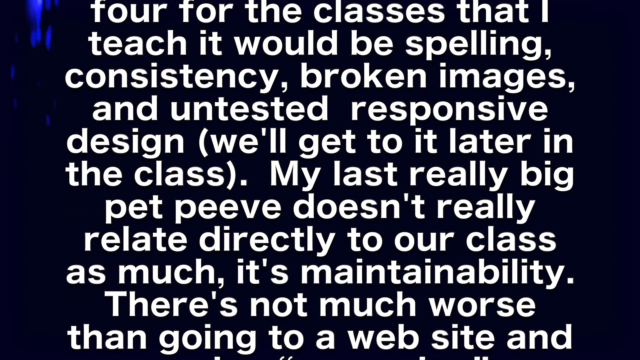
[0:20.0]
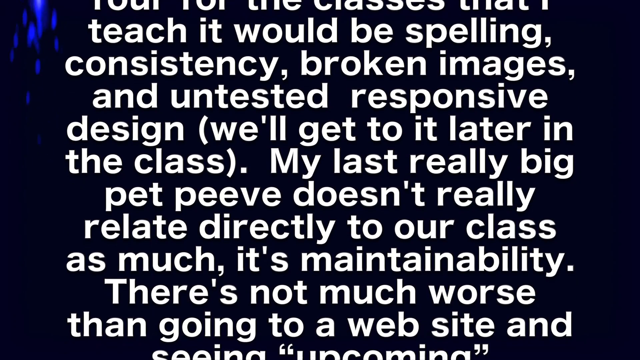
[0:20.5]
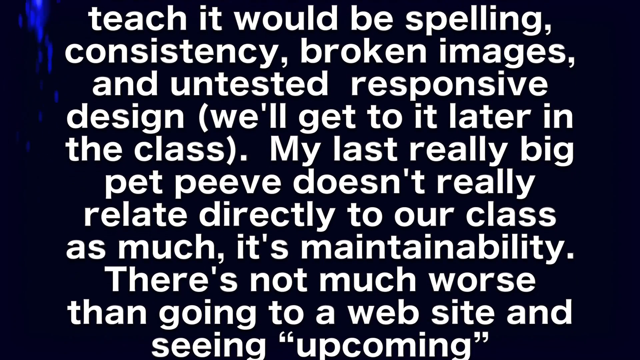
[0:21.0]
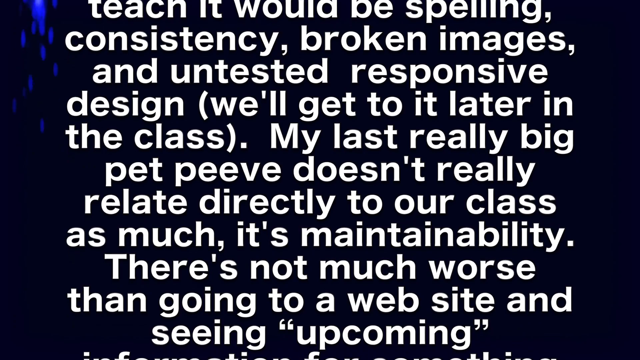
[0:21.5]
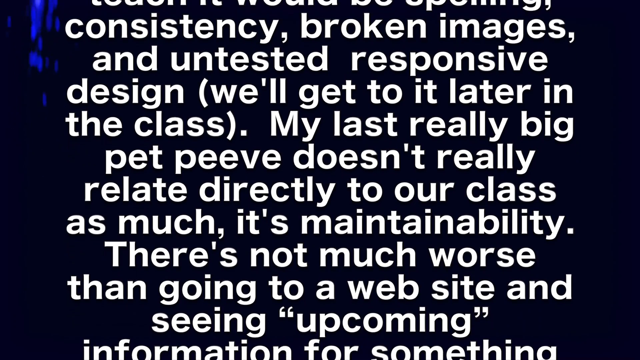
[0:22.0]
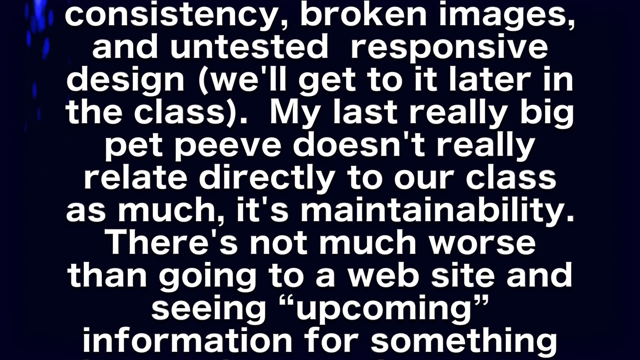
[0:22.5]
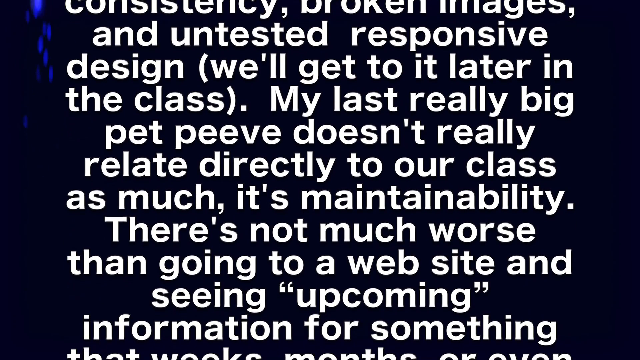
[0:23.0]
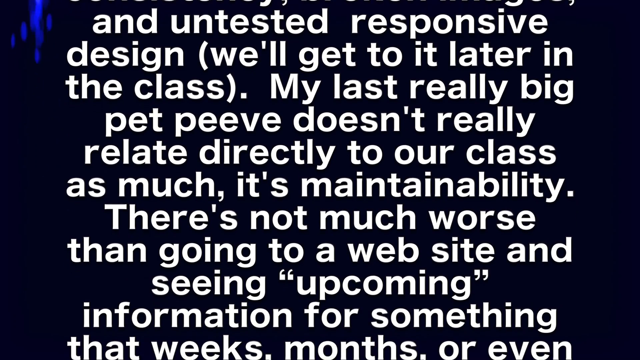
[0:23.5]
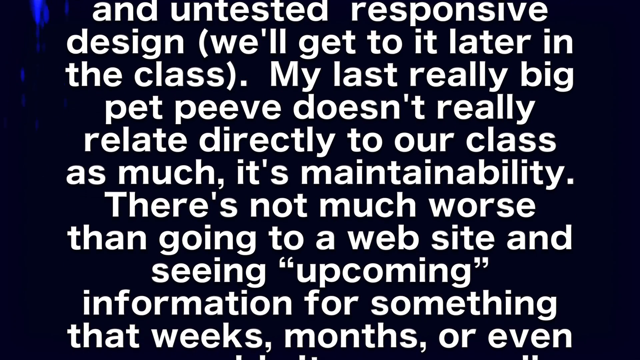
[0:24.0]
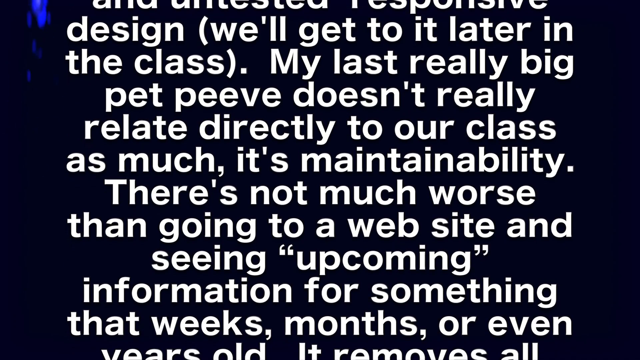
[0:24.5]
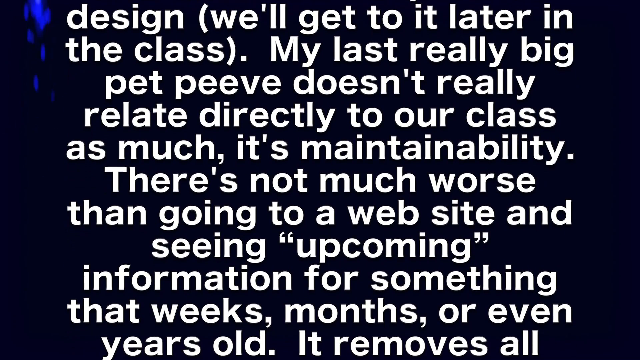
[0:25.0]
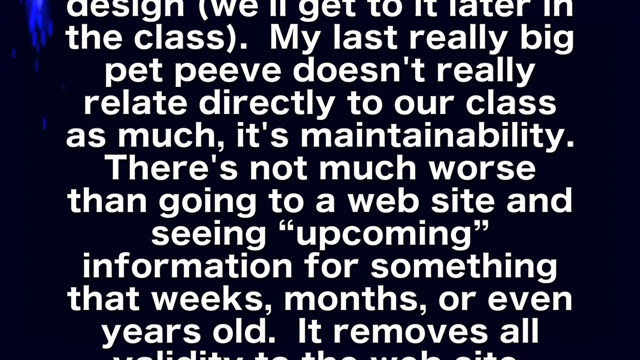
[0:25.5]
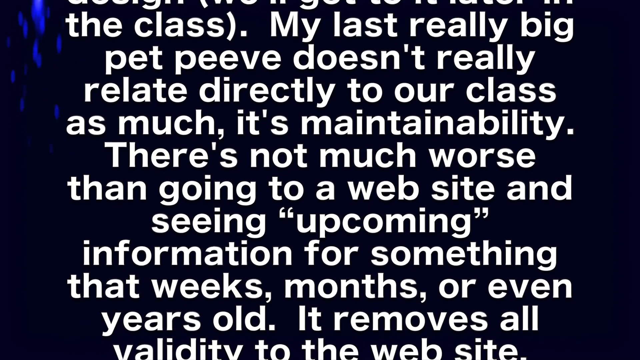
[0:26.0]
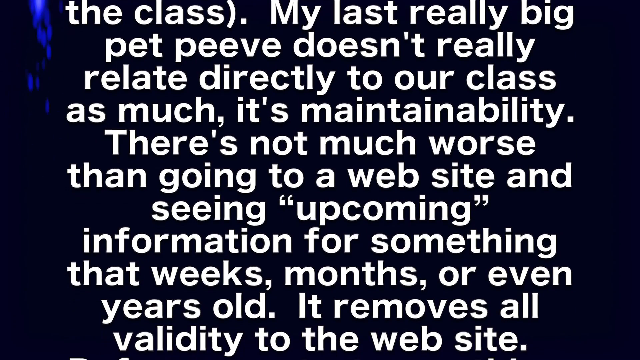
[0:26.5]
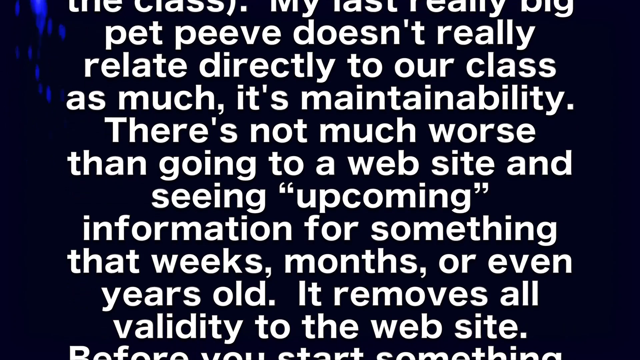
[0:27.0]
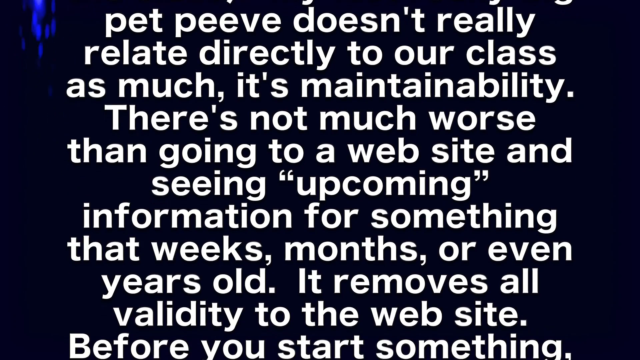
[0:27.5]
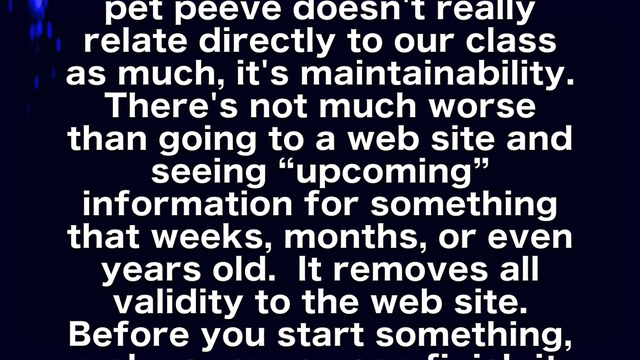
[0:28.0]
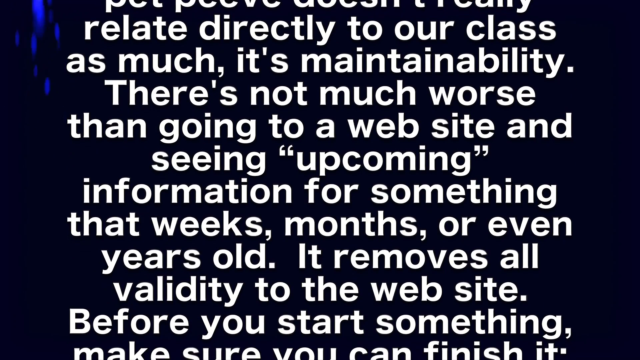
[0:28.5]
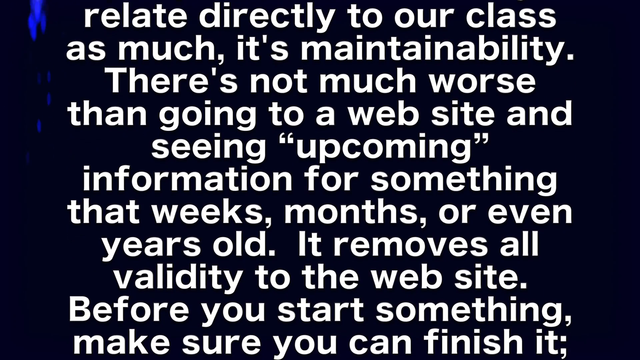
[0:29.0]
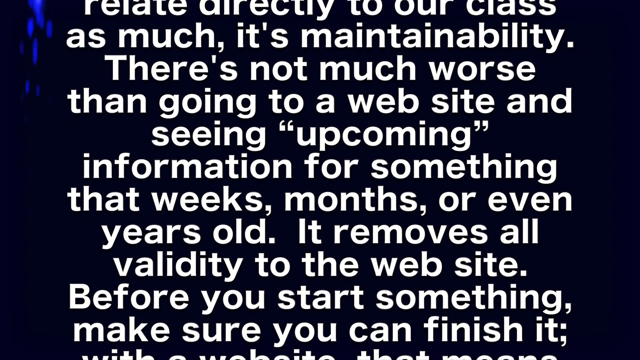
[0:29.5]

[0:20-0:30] Text on screen reads, "Four, for the classes that I teach, it would be spelling, consistency, broken images, and untested responsive design. We'll get to it later in the class. My last really big pet peeve doesn't really relate directly to our class as much. It's maintainability. There's not much worse than going to a website and seeing upcoming information for something that weeks, months, or even years old. It removes all of the validity to the website. Before you start something, make sure you can finish it." The background is dark blue and blackish in color.